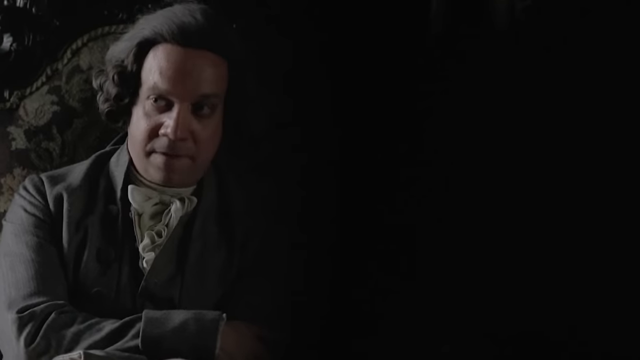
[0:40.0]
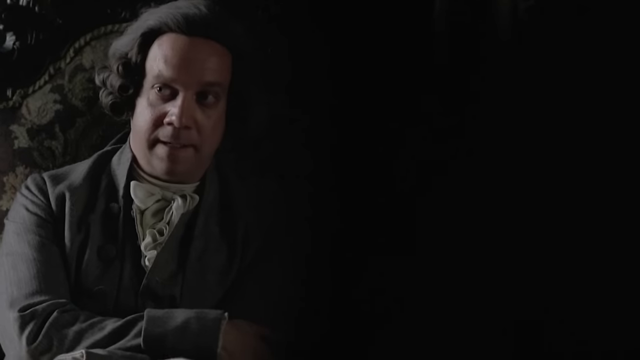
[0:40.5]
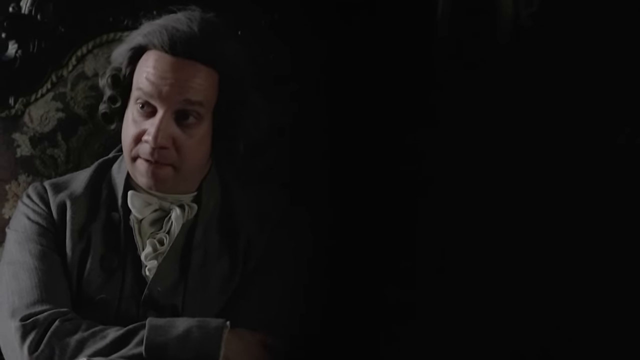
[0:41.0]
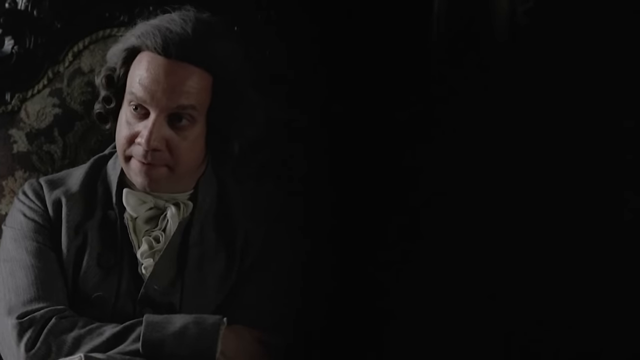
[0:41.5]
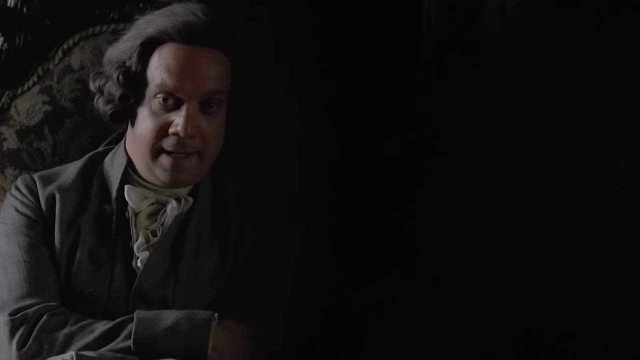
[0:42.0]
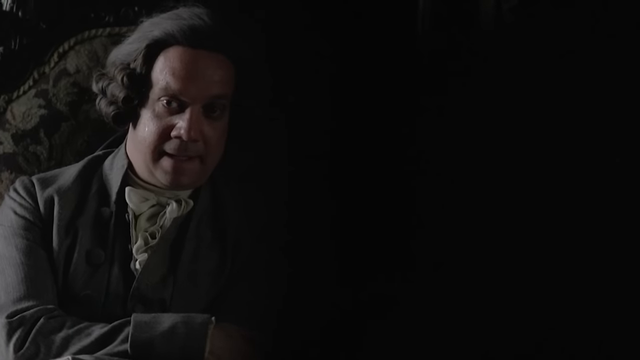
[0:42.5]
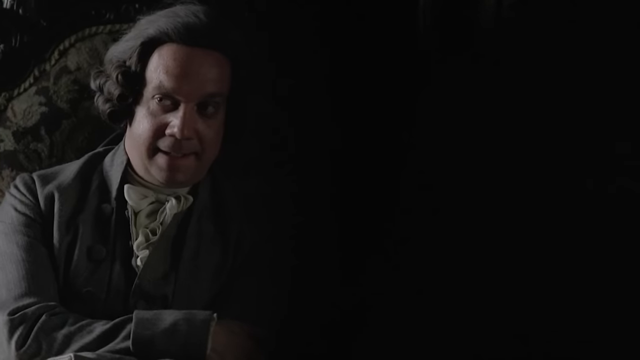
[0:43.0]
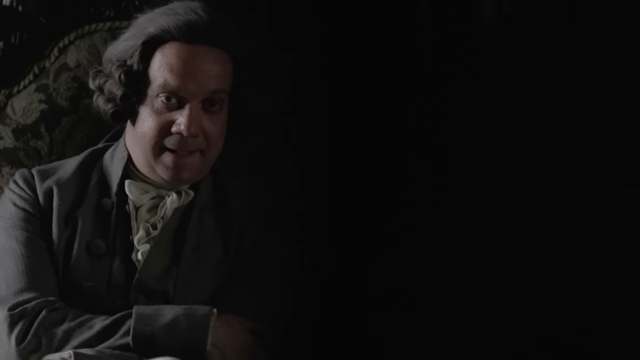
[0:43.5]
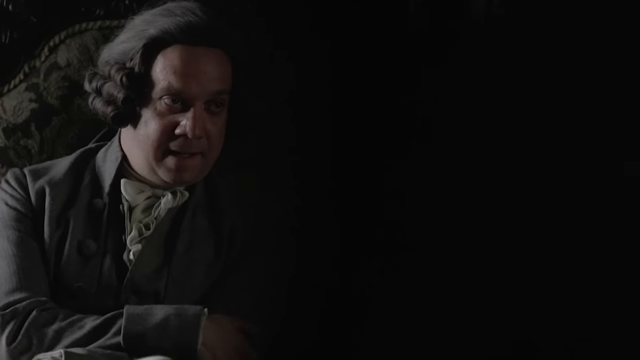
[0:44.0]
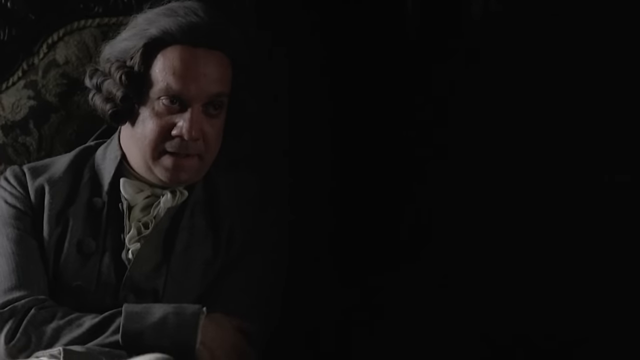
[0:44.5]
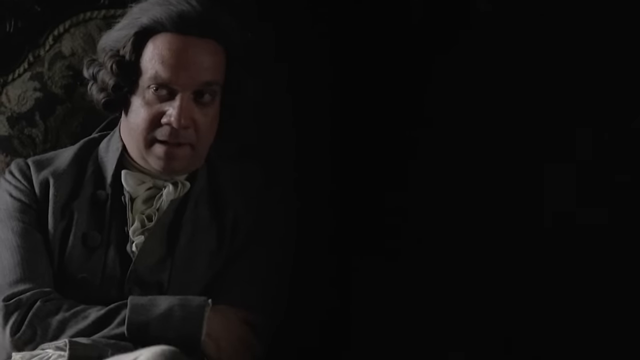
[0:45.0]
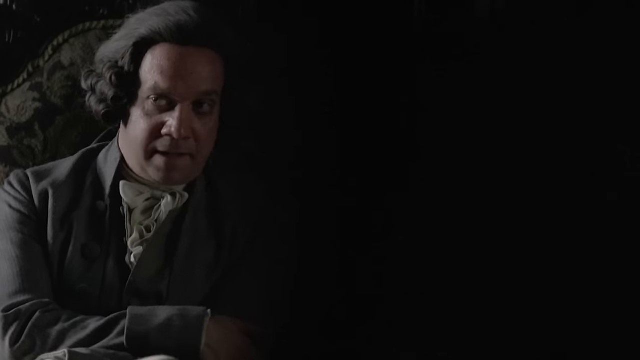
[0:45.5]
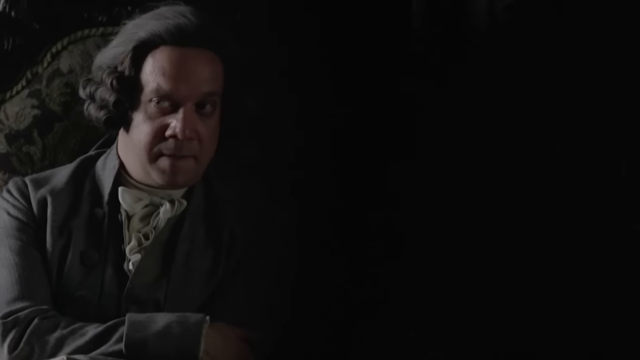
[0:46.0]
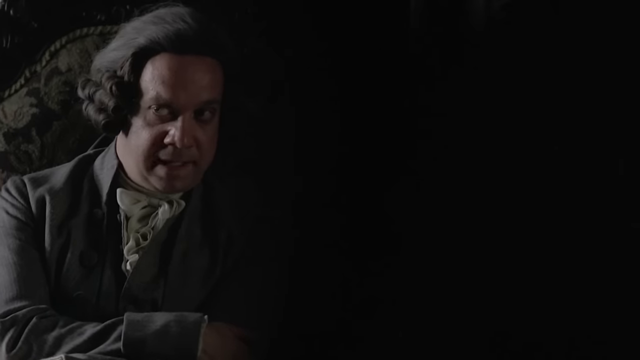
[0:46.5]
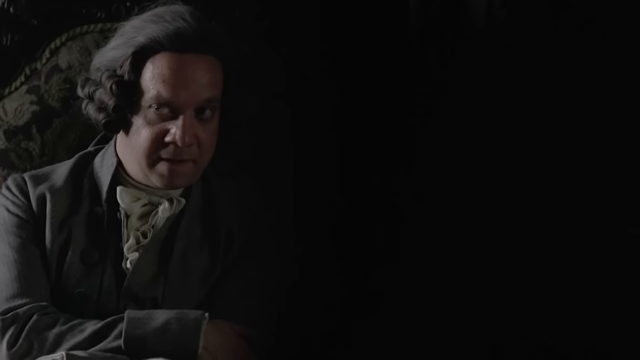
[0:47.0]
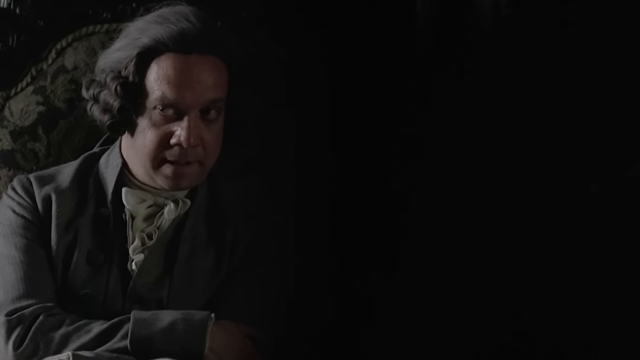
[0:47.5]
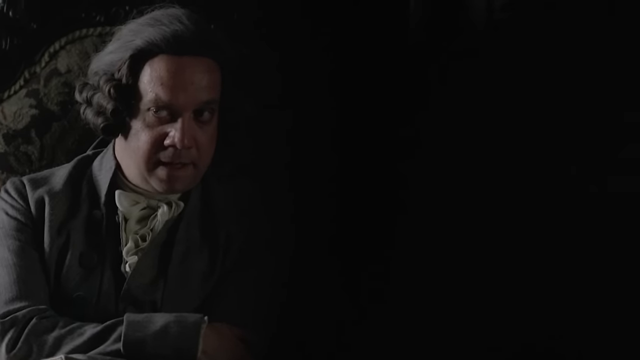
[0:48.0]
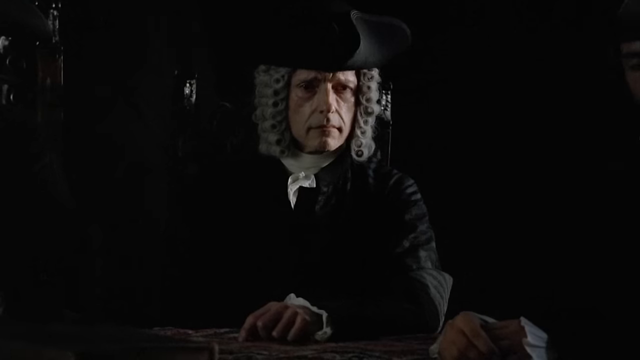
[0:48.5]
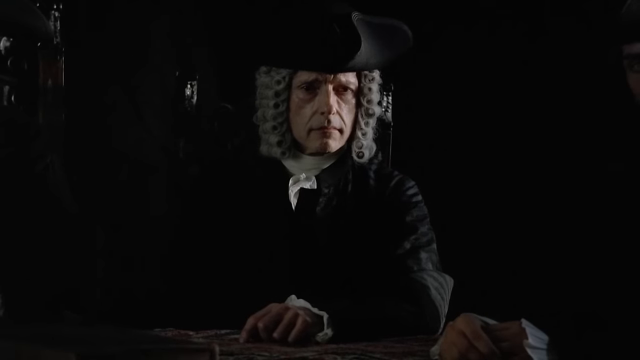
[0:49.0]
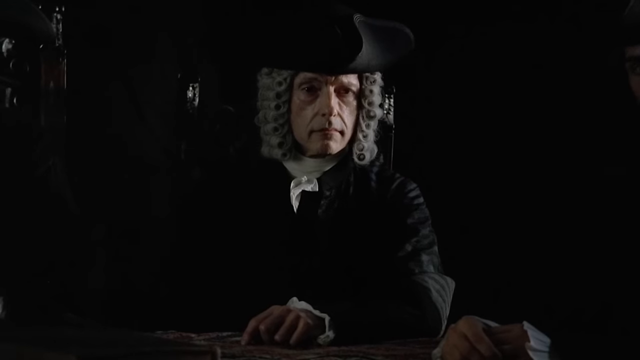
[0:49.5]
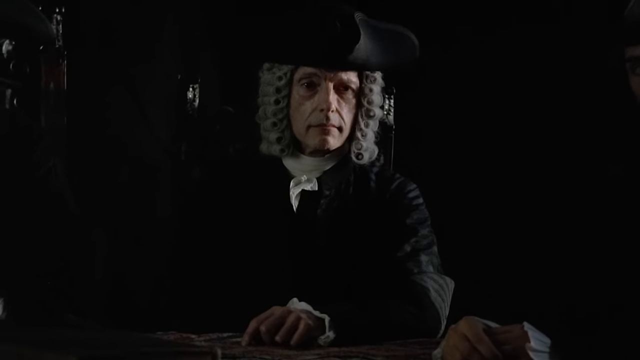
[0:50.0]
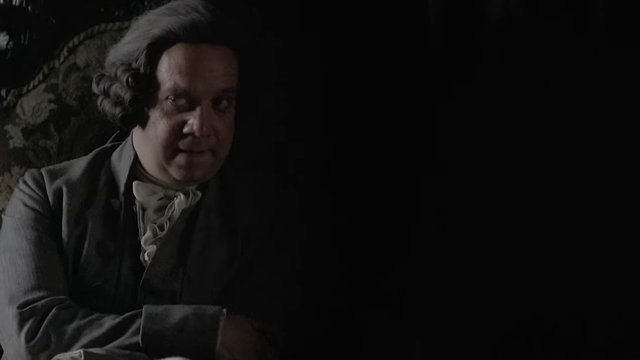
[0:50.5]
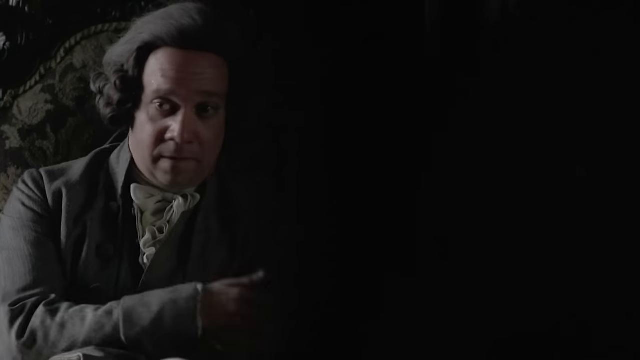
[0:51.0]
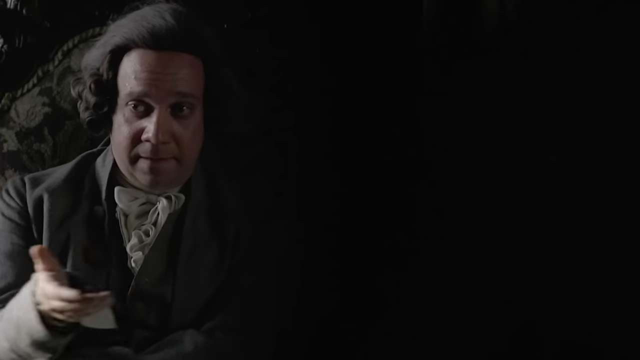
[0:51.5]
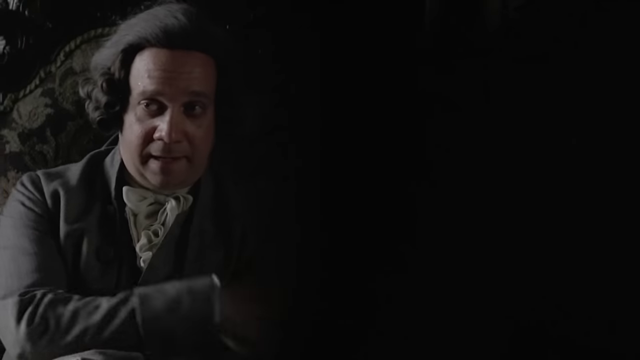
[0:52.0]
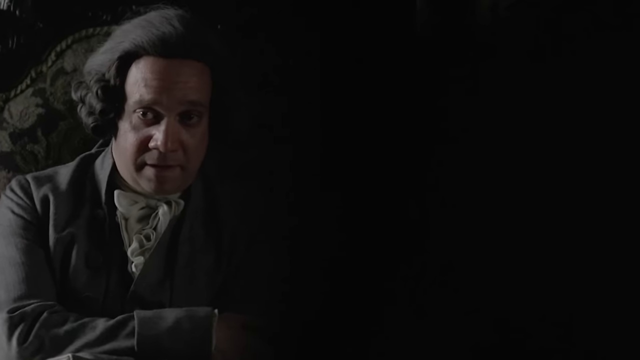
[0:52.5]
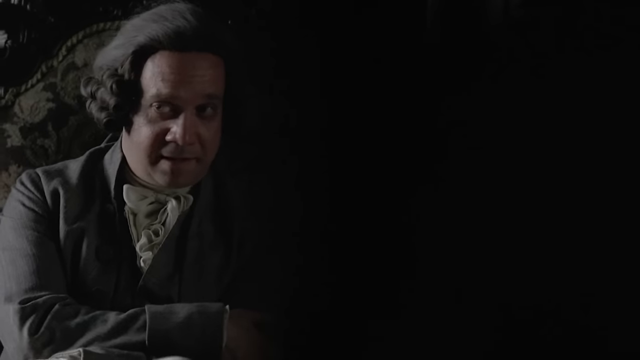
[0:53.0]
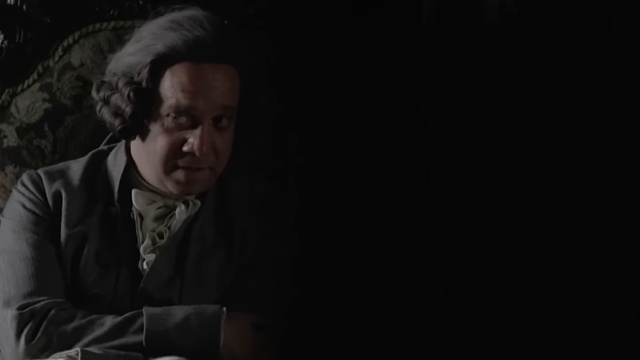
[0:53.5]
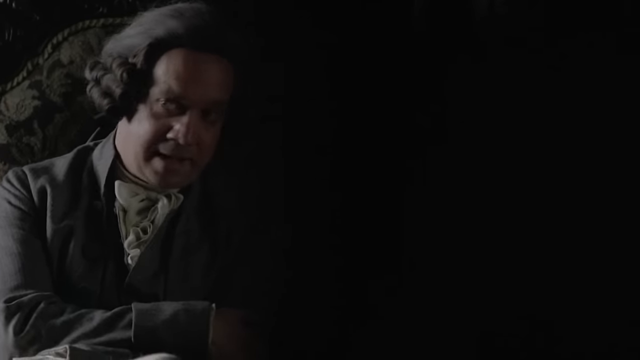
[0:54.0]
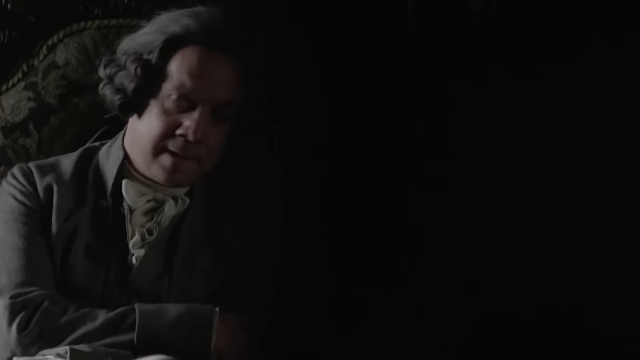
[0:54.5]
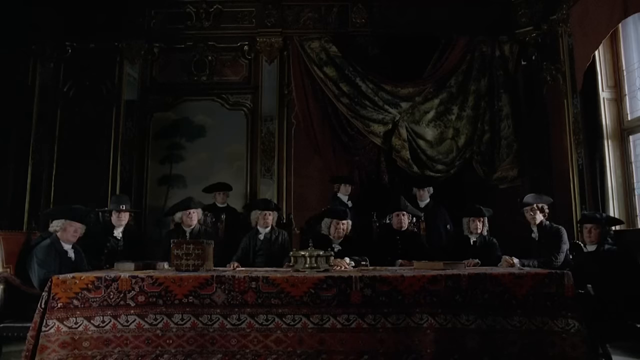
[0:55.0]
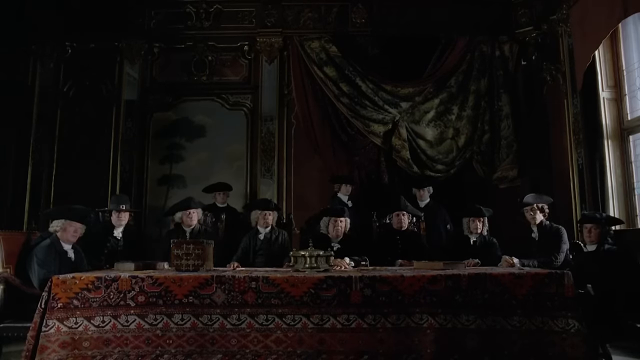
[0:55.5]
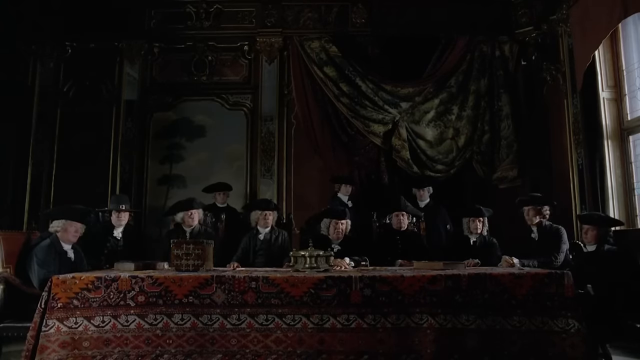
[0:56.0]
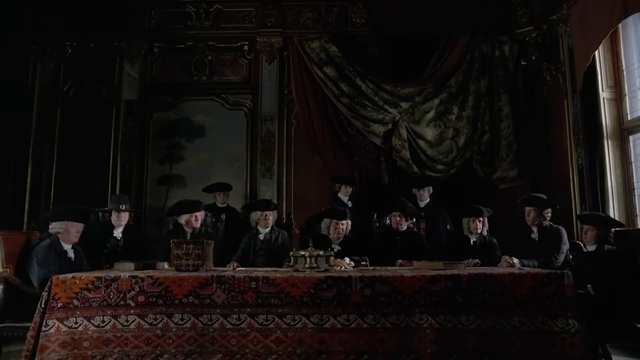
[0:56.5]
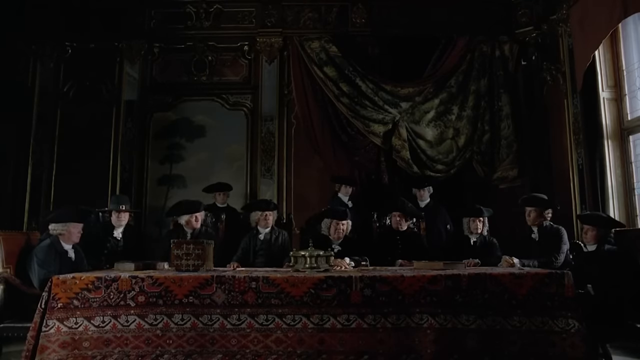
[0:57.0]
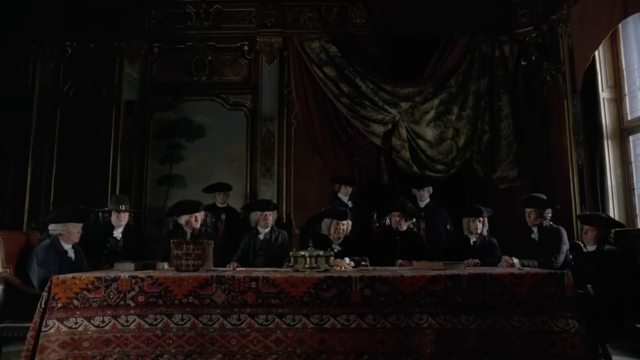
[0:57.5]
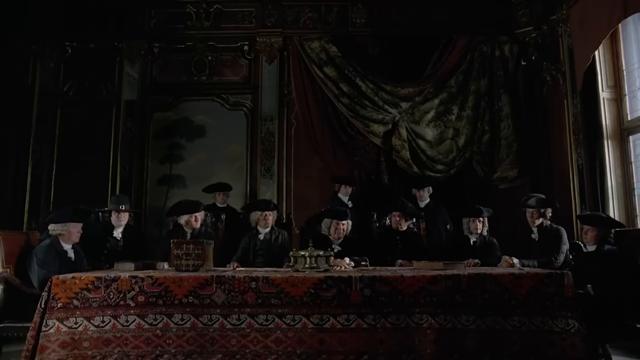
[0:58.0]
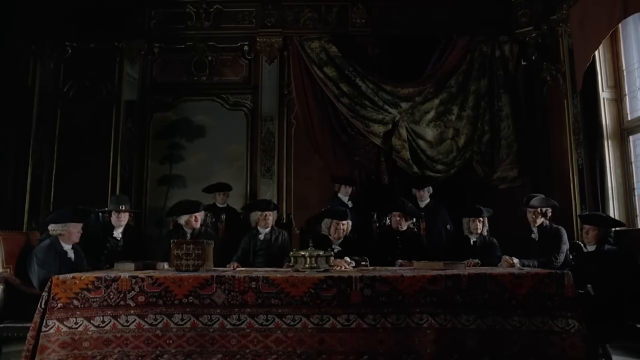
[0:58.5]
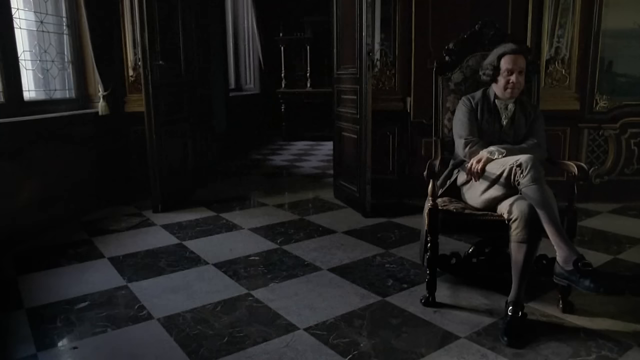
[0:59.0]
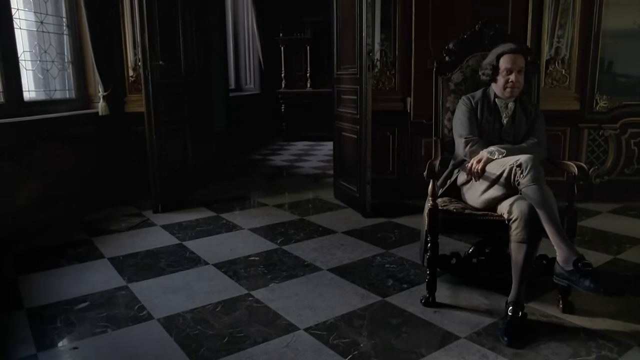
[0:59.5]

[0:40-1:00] The man keeps talking with a very serious face, nodding his head. He seems a bit amused by something he has just said, then continues talking, raising his hands and nodding. The people he is addressing, probably a jury, look at each other as they listen. No one is laughing; they are all serious and attentive. The man wears black attire, and the members he addresses are also dressed in black, with black heads.